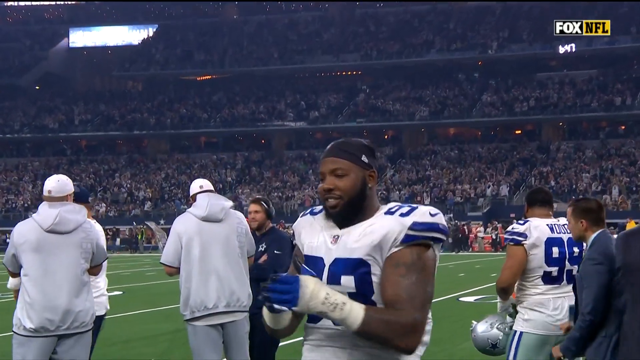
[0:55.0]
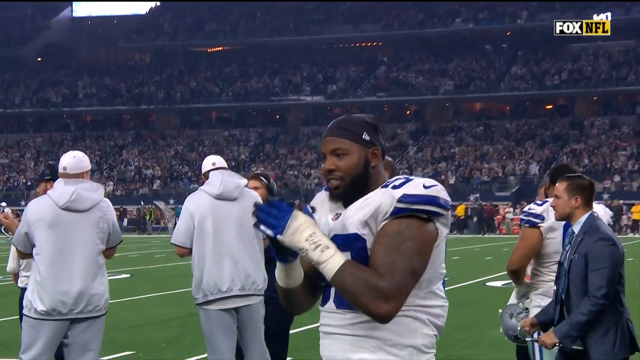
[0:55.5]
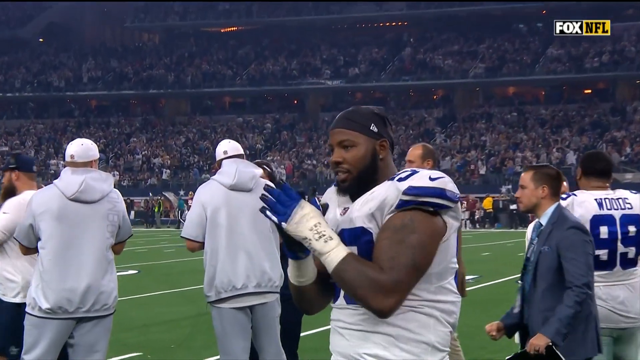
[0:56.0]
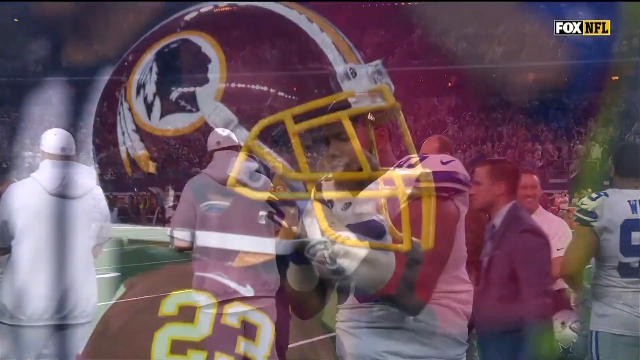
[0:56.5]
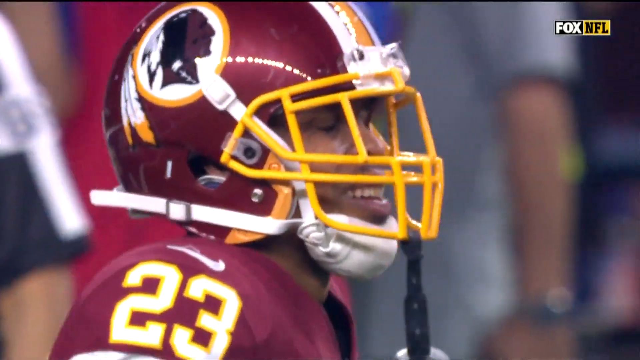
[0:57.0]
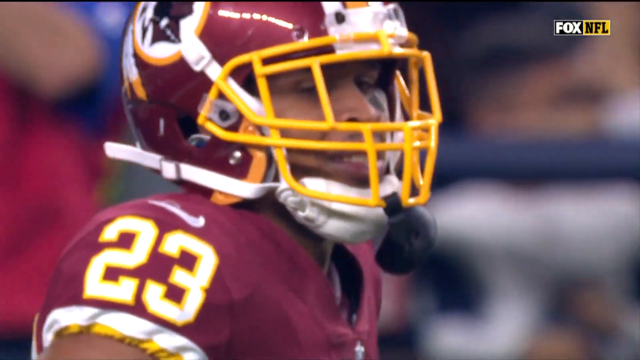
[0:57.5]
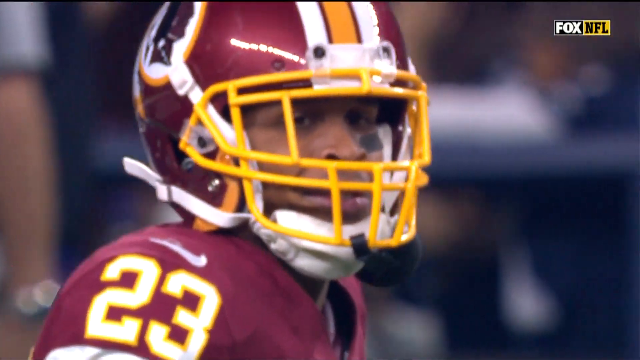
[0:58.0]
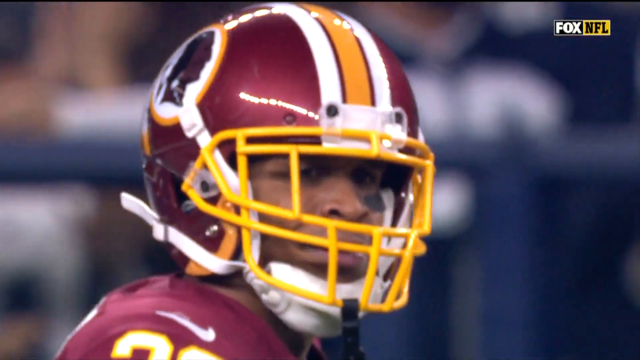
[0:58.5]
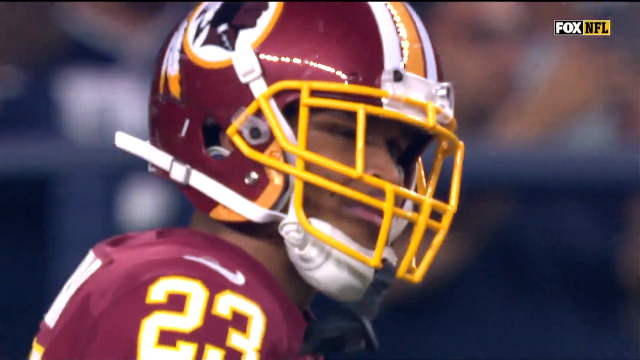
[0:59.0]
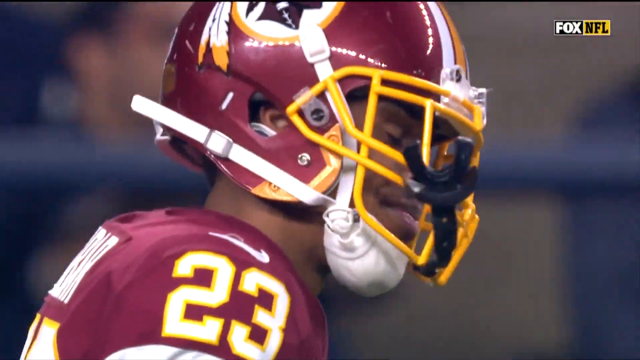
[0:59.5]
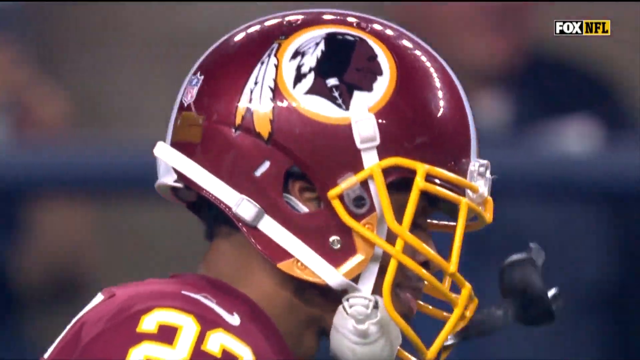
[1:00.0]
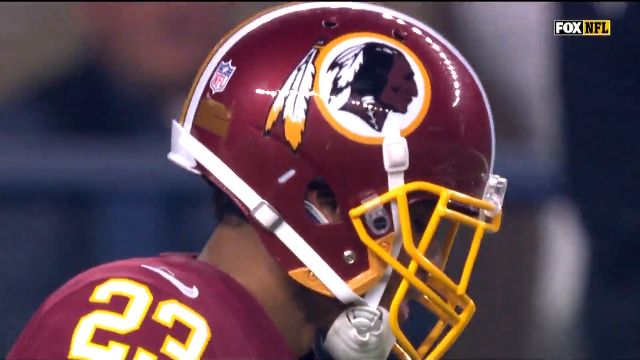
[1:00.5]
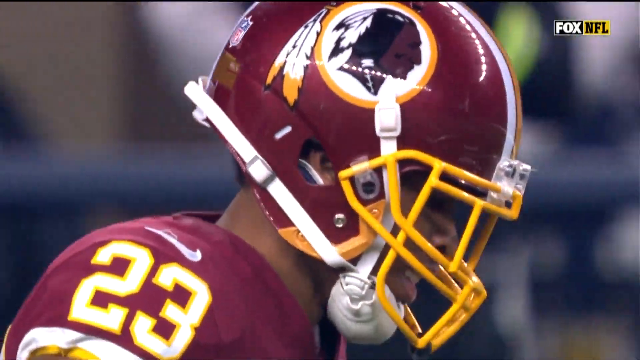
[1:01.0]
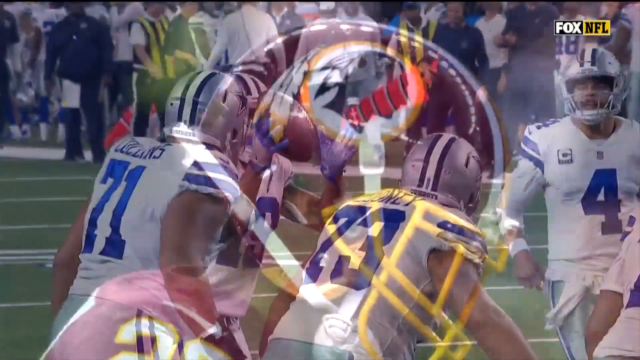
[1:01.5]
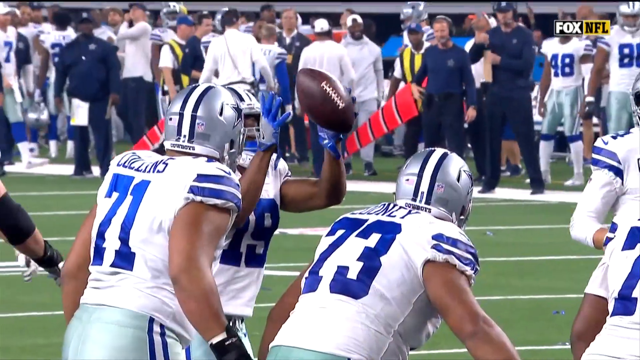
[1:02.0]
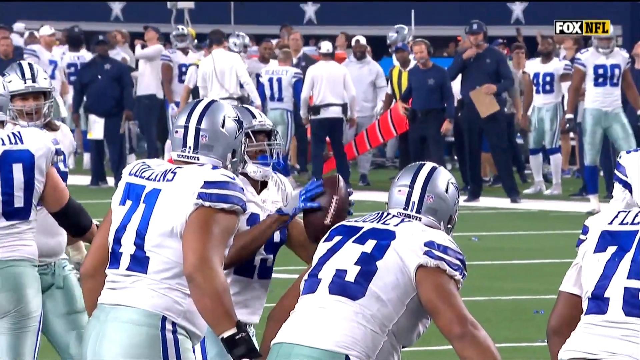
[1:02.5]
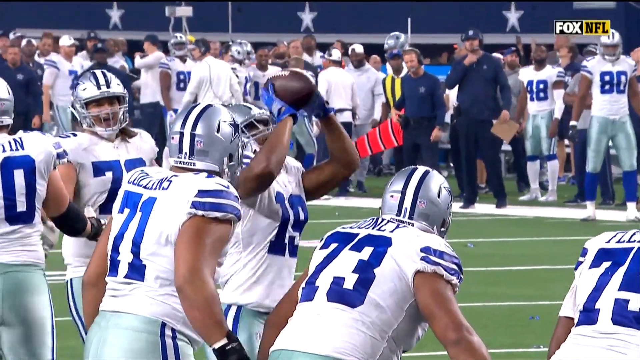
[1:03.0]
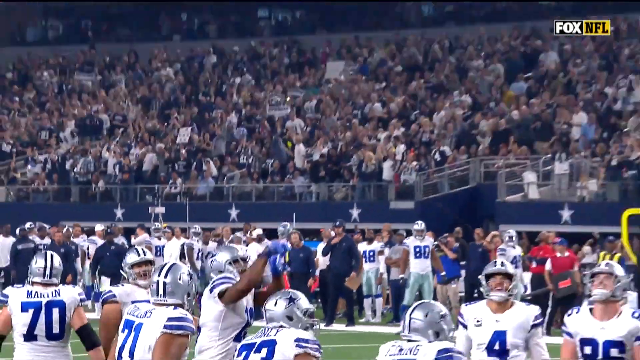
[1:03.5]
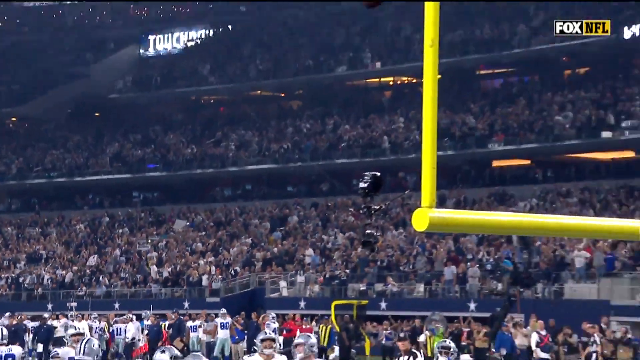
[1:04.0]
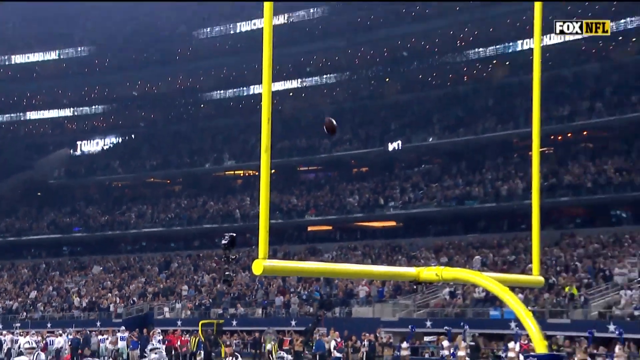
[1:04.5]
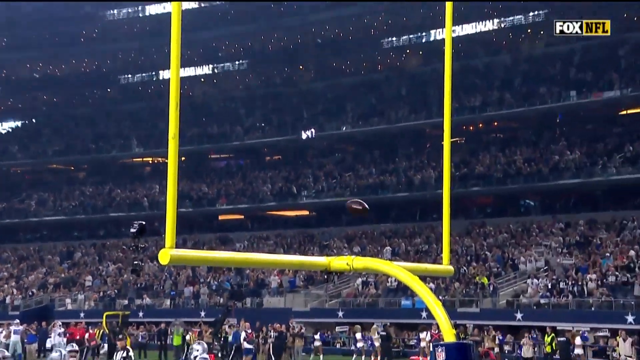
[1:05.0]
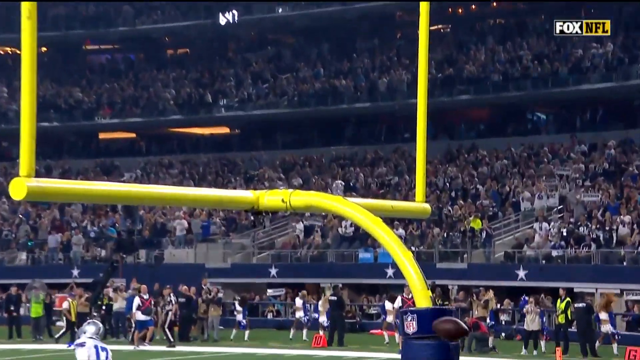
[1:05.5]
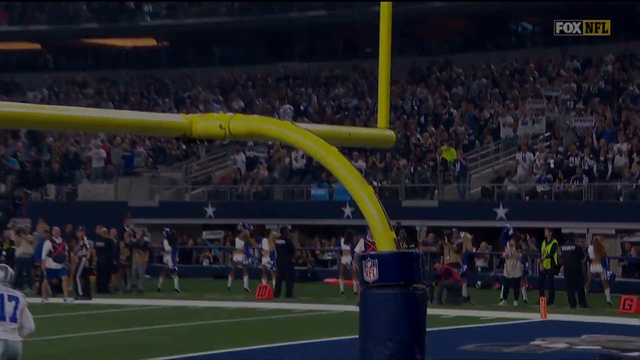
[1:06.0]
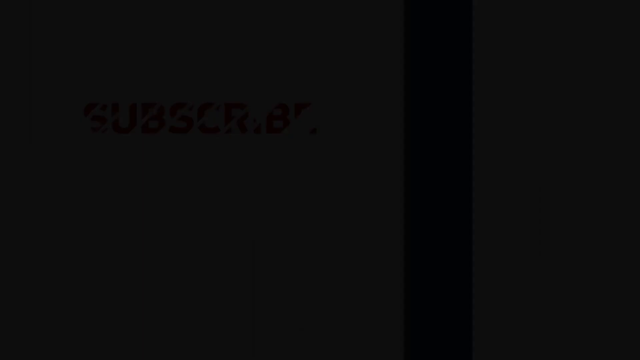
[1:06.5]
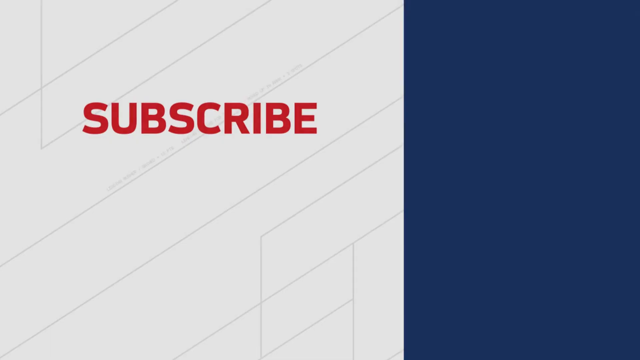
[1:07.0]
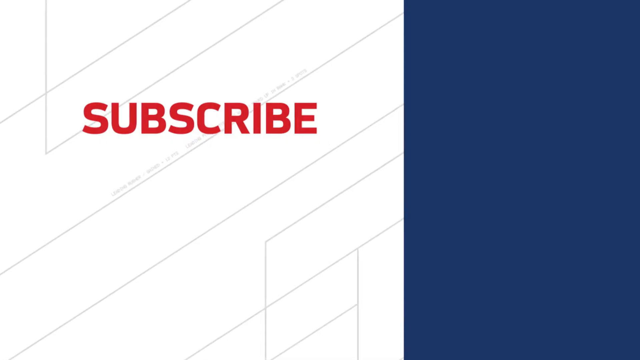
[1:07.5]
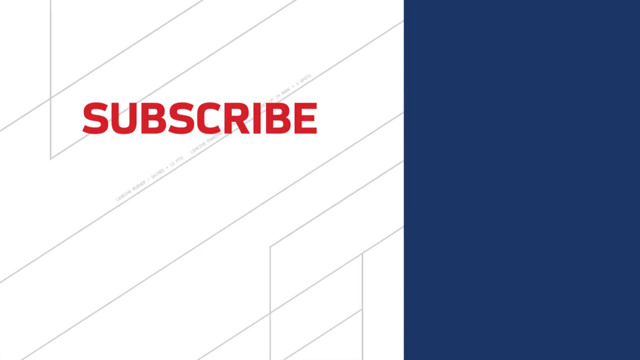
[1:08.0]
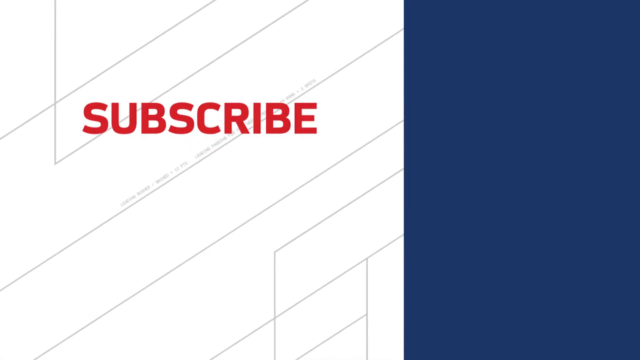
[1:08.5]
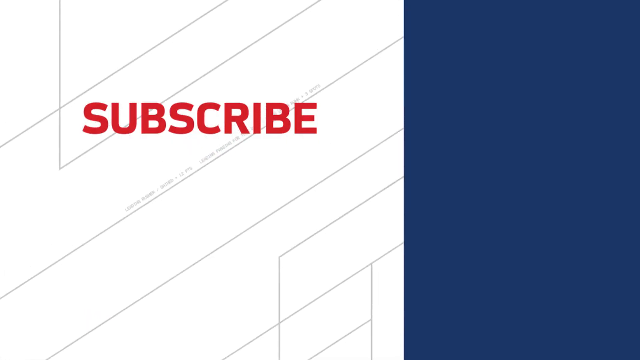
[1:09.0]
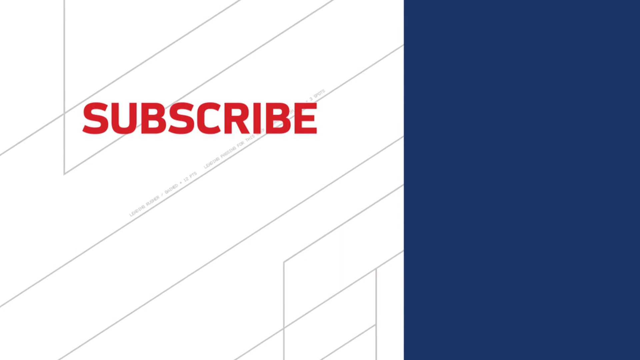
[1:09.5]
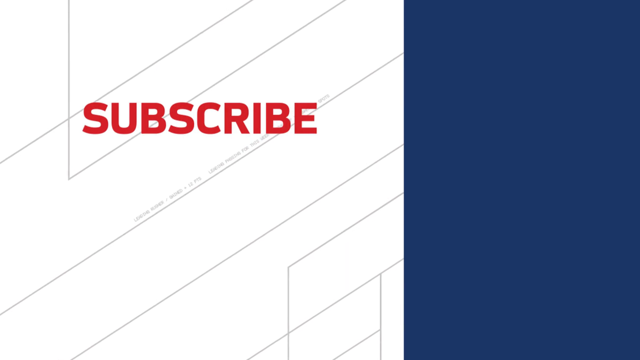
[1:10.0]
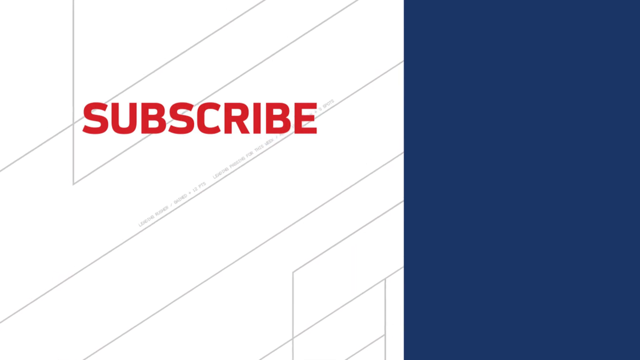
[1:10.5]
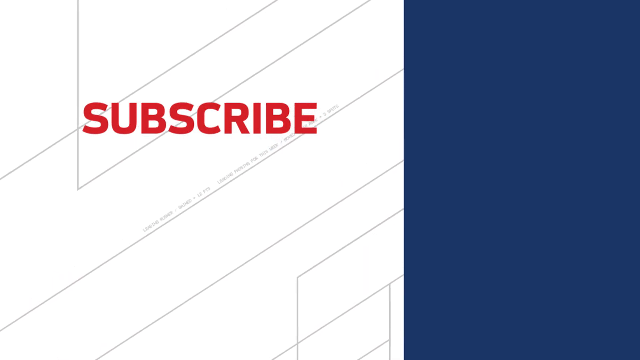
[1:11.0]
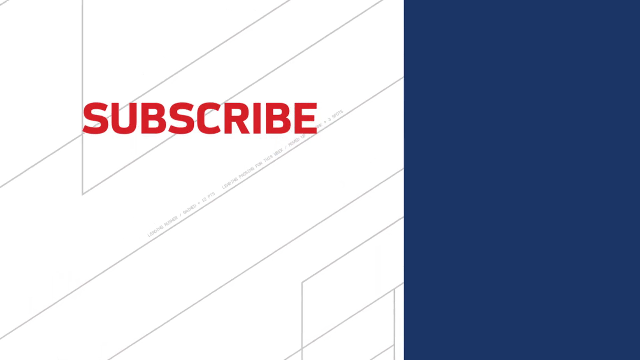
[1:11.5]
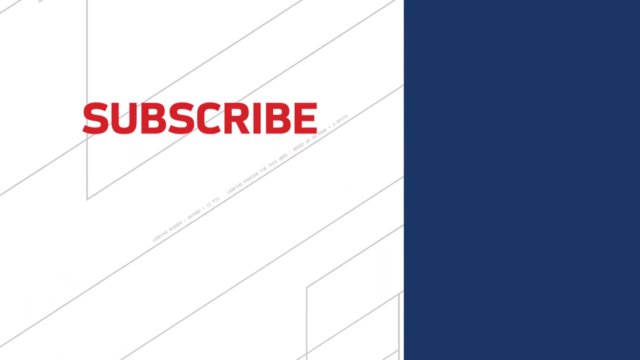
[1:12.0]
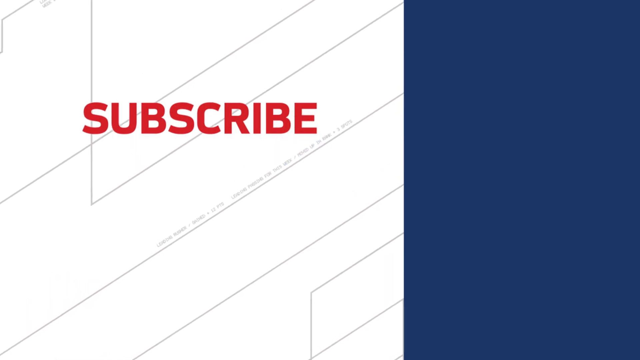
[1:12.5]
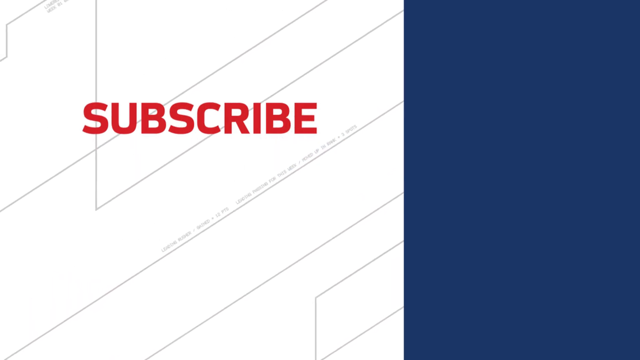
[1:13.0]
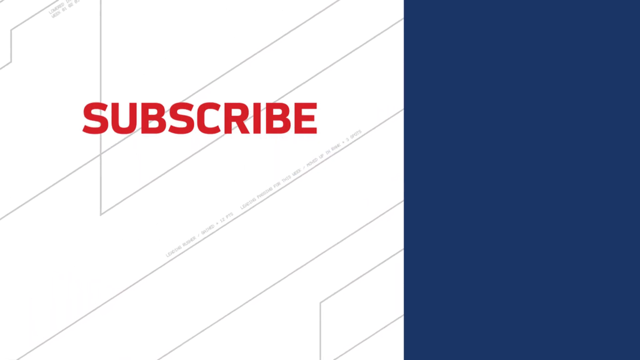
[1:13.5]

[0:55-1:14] During Amari Cooper's celebration, a lineman claps his hands together to celebrate. Number 23 on the Washington Redskins defense, possibly Marshall Lattimore, looks kind of defeated and spits his mouth guard out. A replay shows Cooper fiddling the football between his fingers and then shooting it into the goalpost, imitating basketball. The video ends with an NFL YouTube channel screen prompting viewers to subscribe, with other current NFL videos and the NFL Game Pass shown. The Redskins helmets are dark red with a yellow metal part and a logo of a Native American person with two feathers in the hair. The broadcast is apparently Fox NFL.